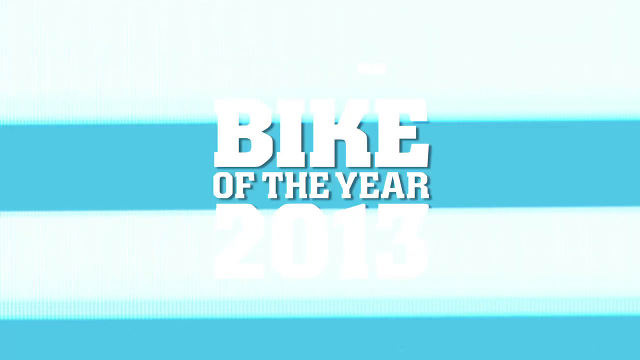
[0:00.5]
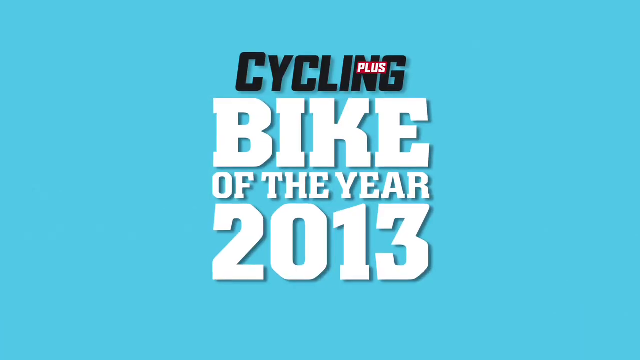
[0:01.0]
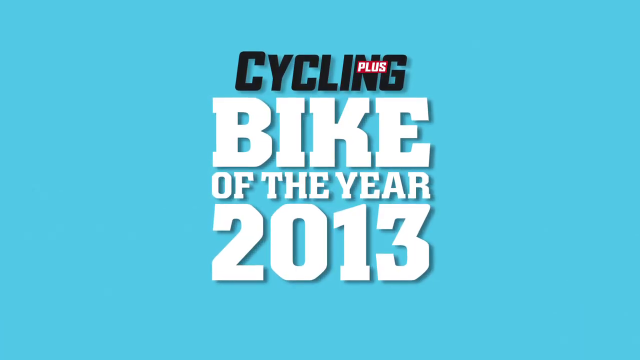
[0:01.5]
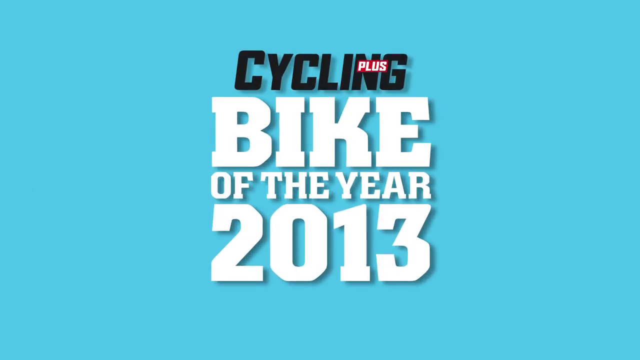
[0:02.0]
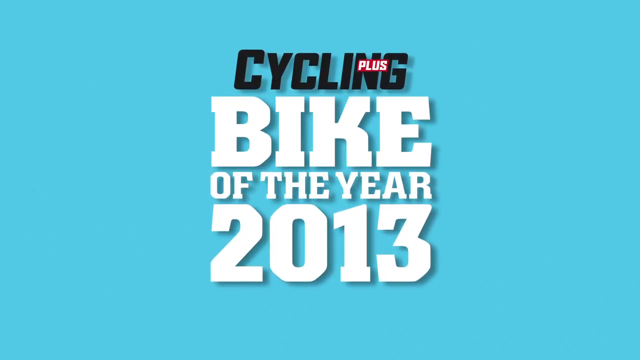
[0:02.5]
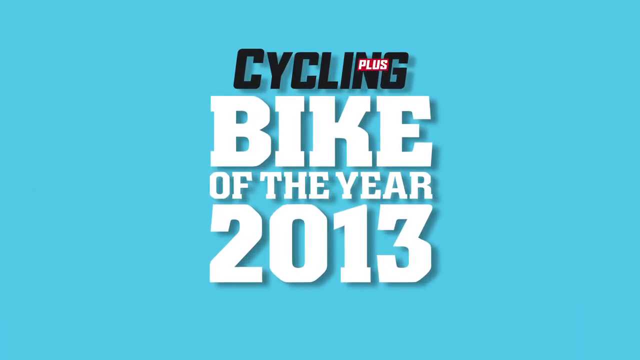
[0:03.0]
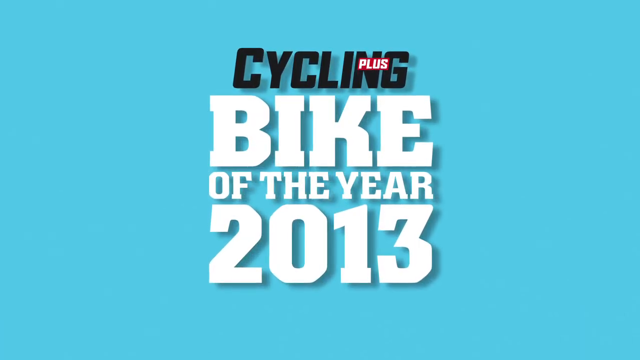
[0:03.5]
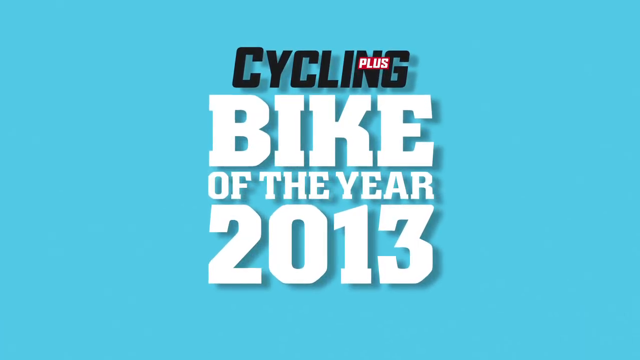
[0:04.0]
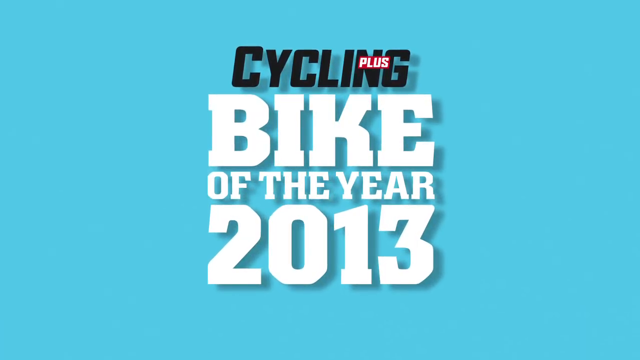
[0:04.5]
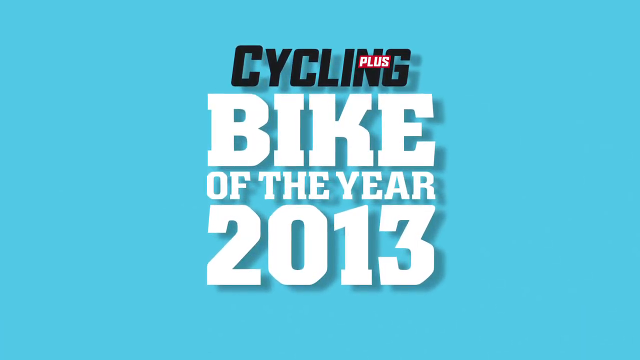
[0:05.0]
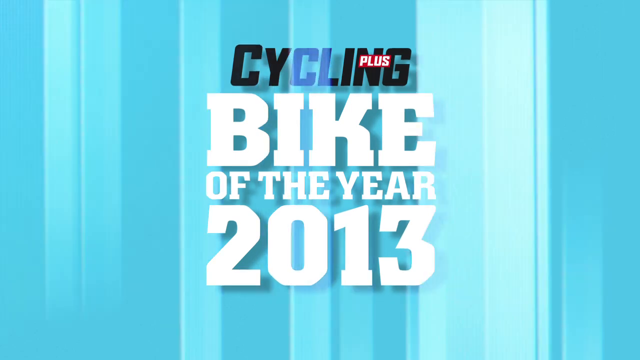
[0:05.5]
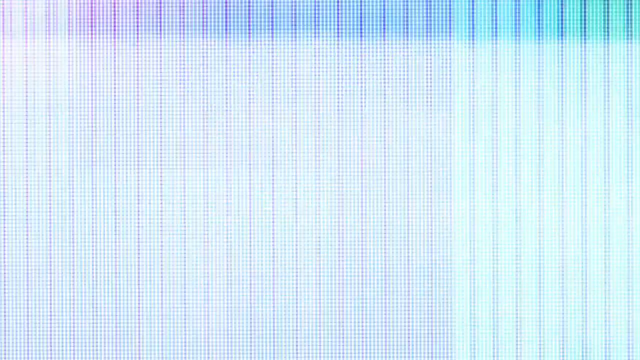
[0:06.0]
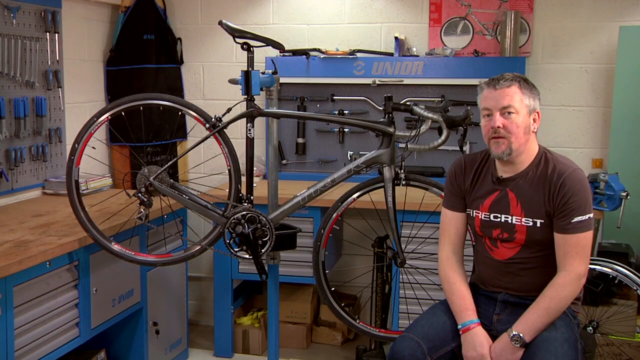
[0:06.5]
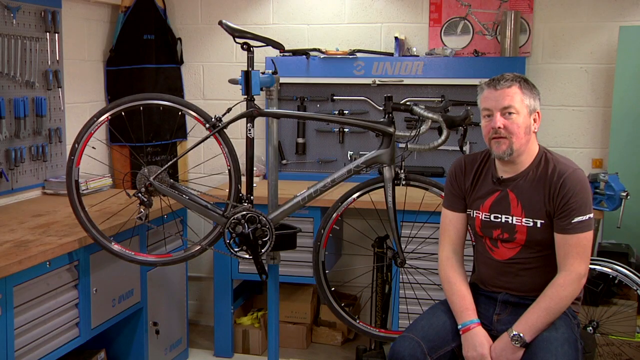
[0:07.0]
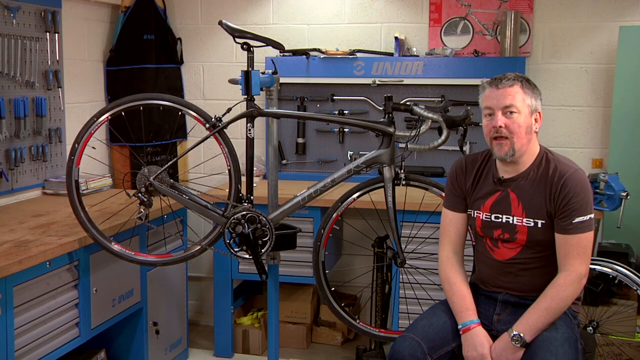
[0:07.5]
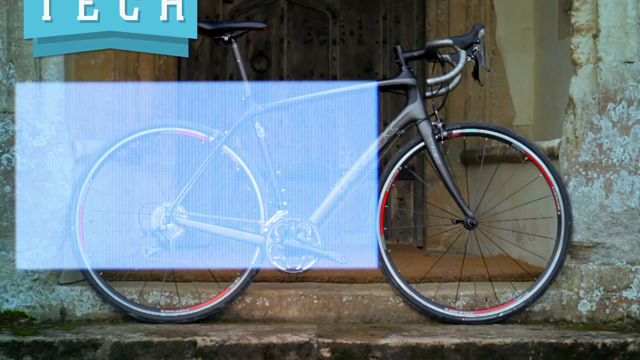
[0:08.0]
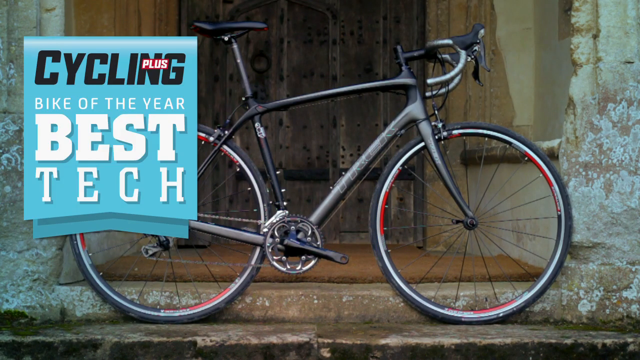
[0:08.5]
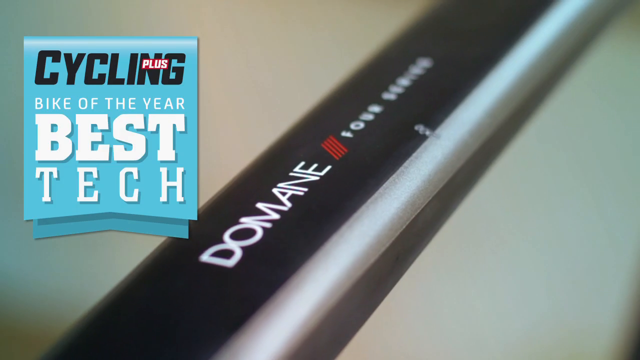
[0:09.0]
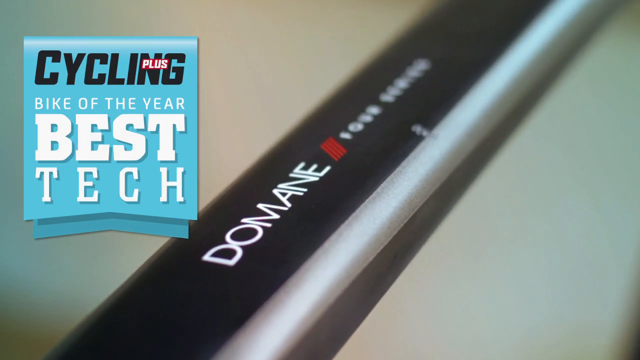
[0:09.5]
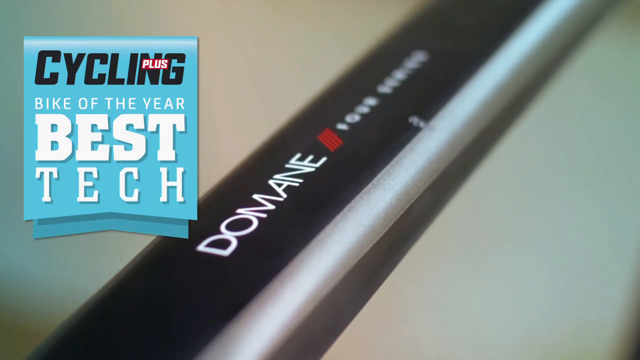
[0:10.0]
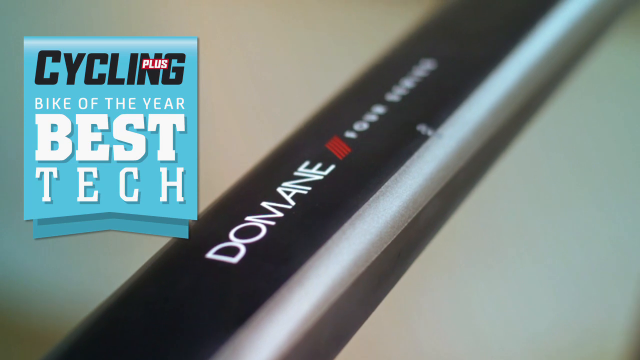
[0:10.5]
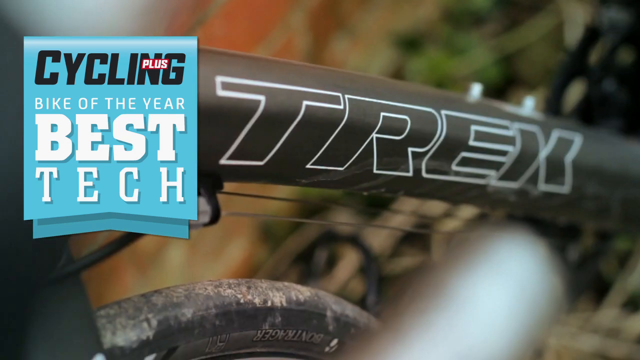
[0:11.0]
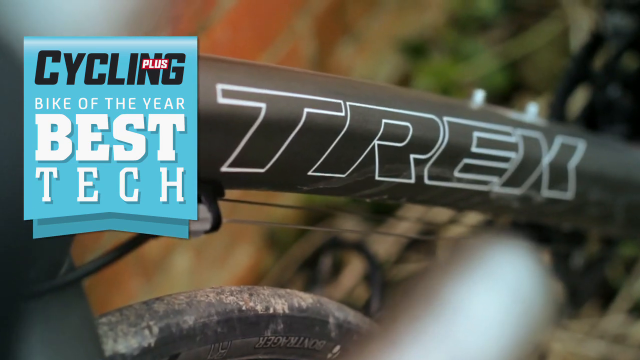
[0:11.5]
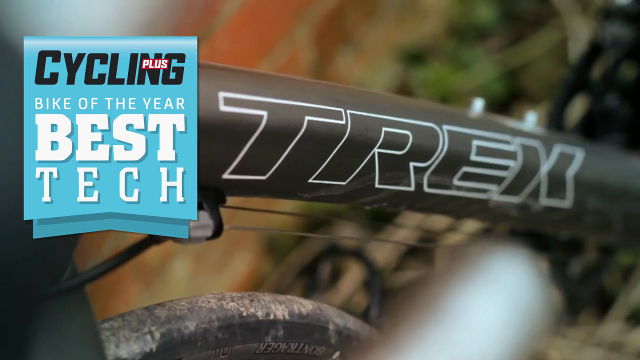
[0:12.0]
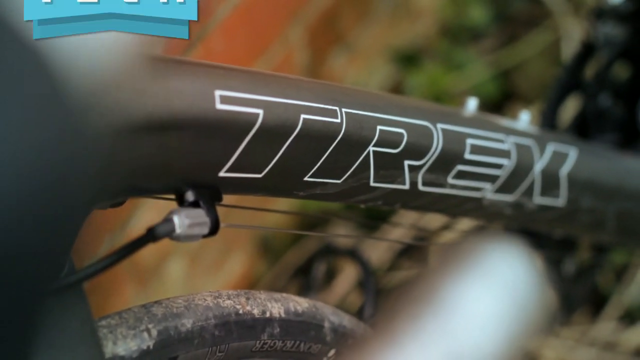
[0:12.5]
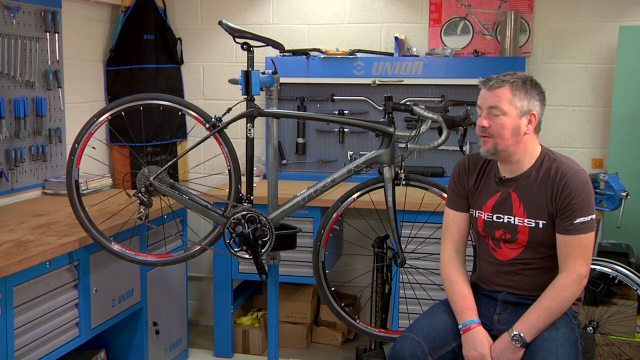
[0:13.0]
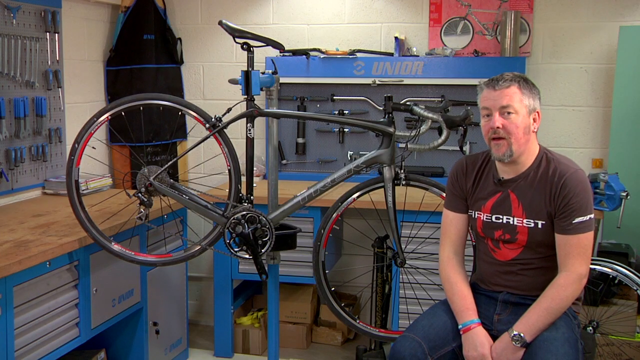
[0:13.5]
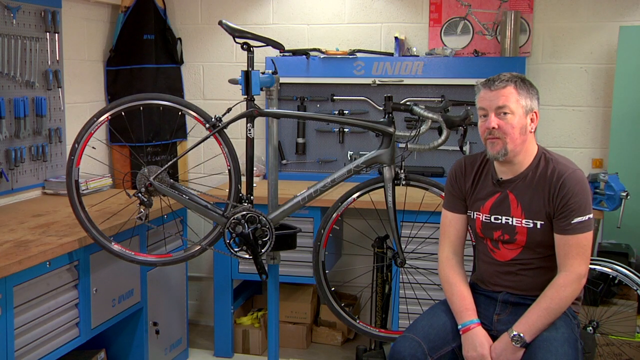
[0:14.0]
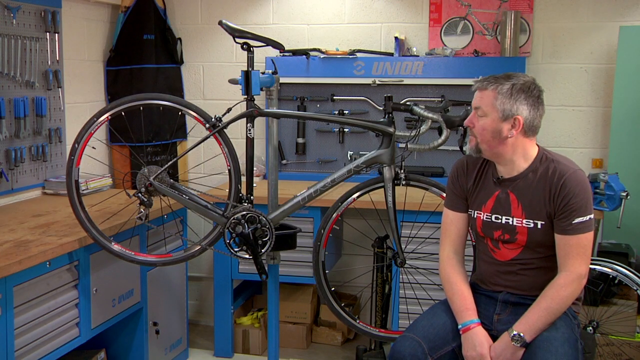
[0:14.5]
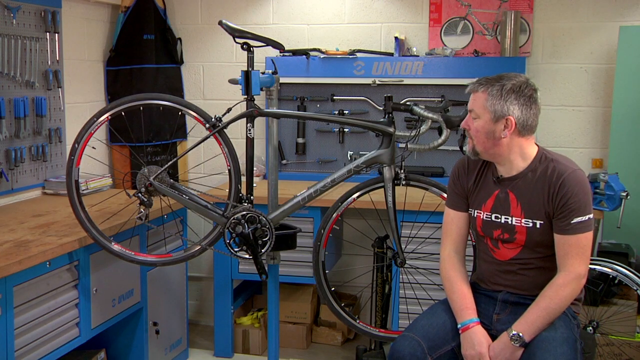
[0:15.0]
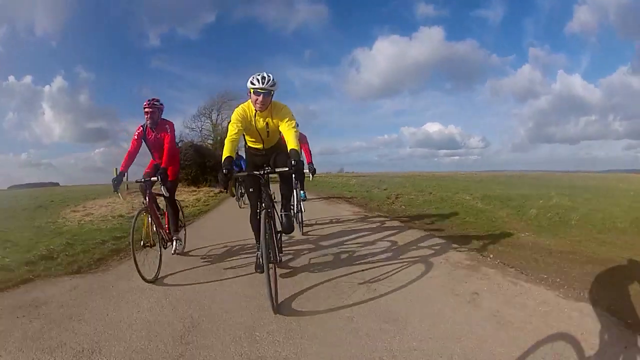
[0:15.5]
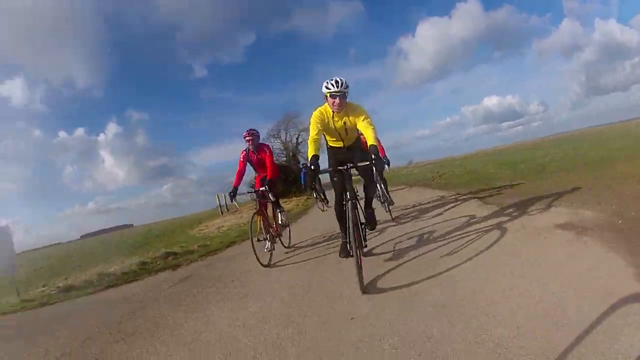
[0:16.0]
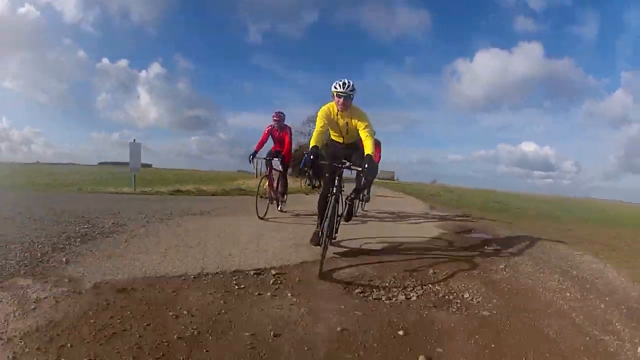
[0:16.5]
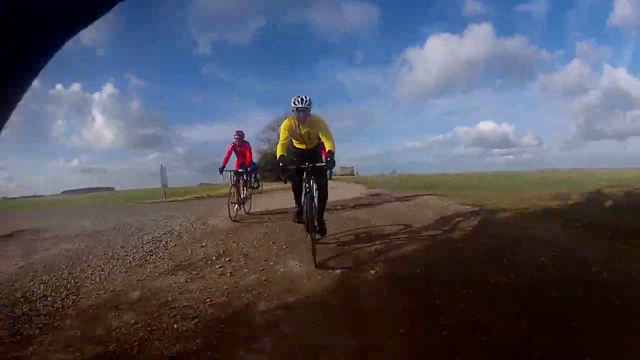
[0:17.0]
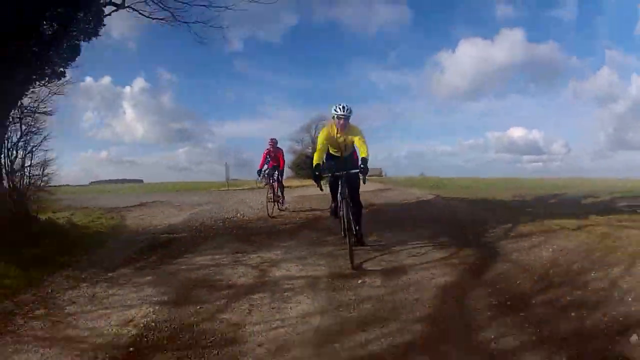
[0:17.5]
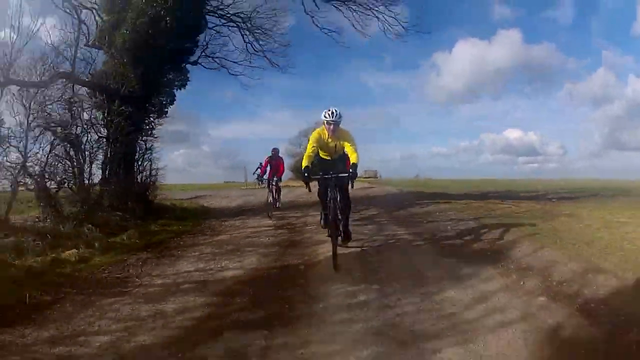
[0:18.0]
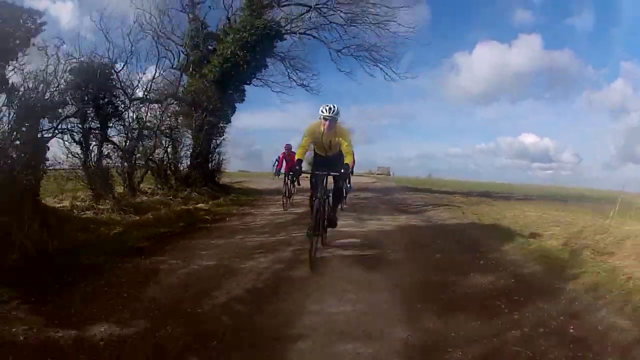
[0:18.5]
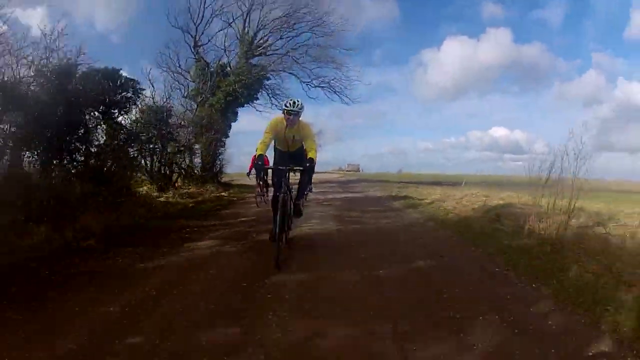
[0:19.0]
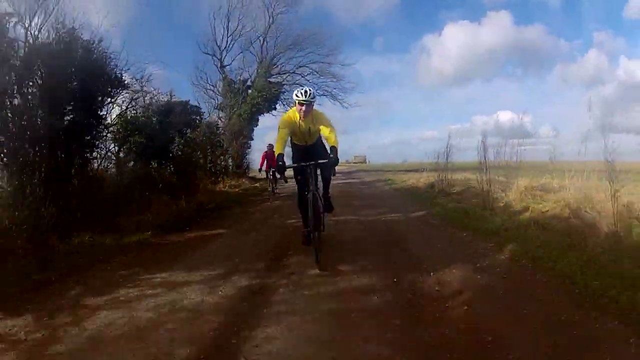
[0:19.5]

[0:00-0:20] An opening frame shows that the video is about the Cycling Plus Bike of the Year 2013, and the bike named Bike of the Year appears to be the Trek Domain 4.3, which is also shown on that frame. Large type about Bike of the Year 2013 introduces the video, then it cuts to a gentleman in a t-shirt and jeans, probably on the youngish side of middle age. He appears to be sitting in a workshop with a bunch of tool chests and benches, and next to him is a gray-framed bike mounted on a stand. He is talking about it, and there are cut-ins to the words "Trek" and "Domain" on the bike. Next, three or four people ride what look like racing bikes along a dirt path through a fairly flat field. They wear helmets and bike jerseys of different colors: yellow, red, and apparently a blue one in the back.